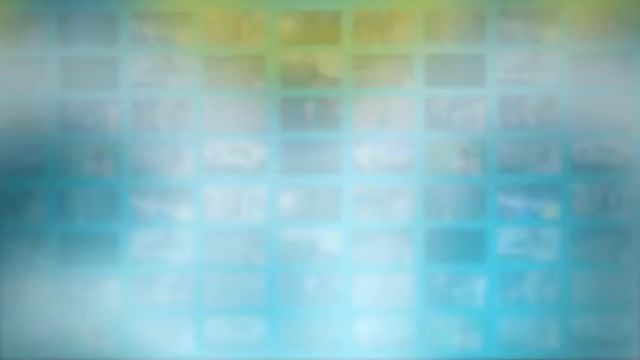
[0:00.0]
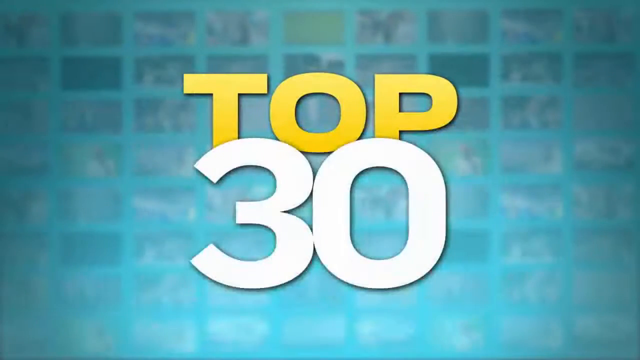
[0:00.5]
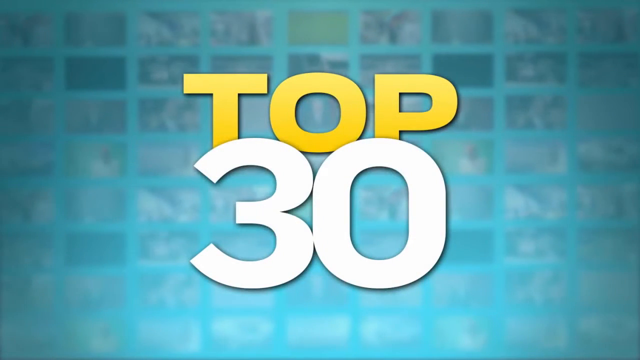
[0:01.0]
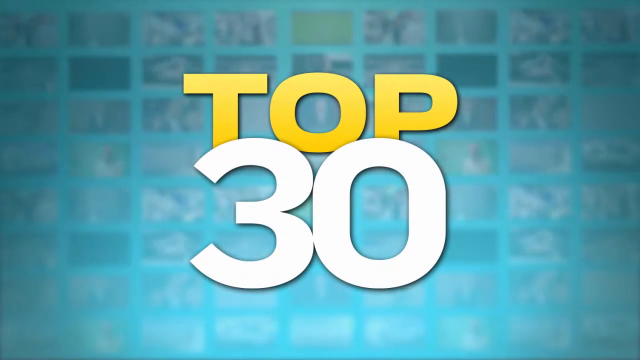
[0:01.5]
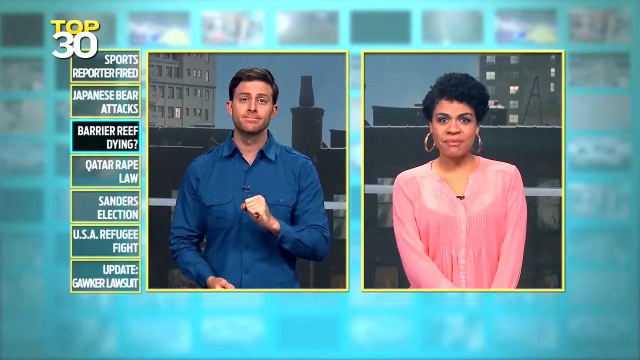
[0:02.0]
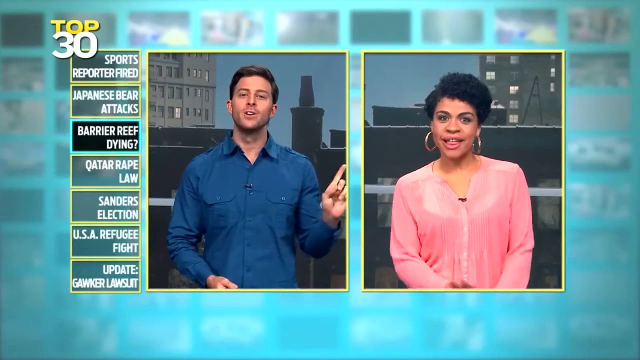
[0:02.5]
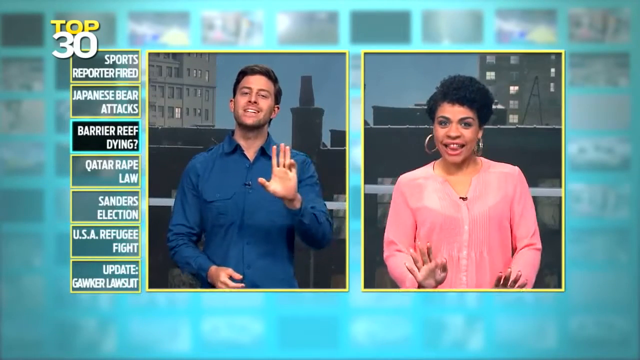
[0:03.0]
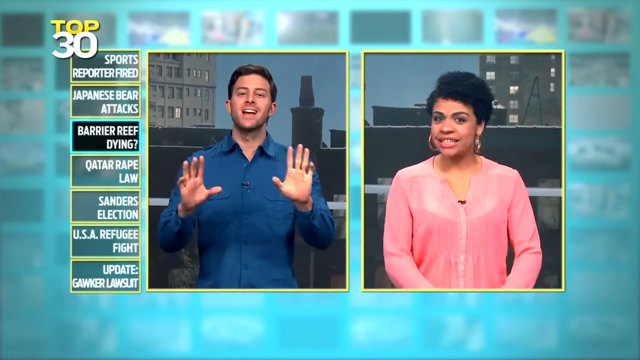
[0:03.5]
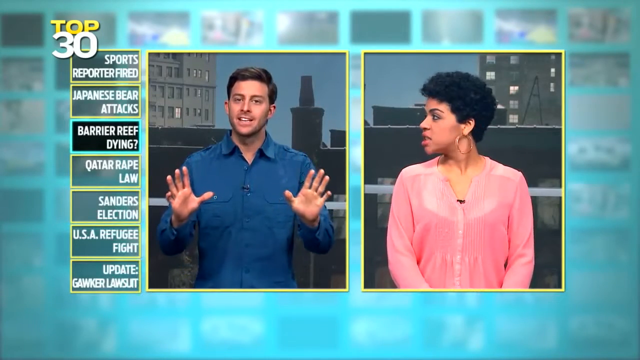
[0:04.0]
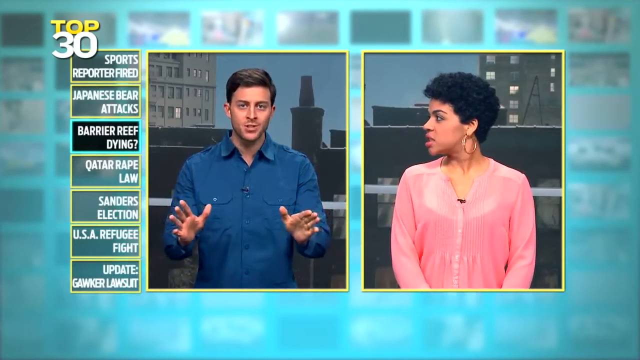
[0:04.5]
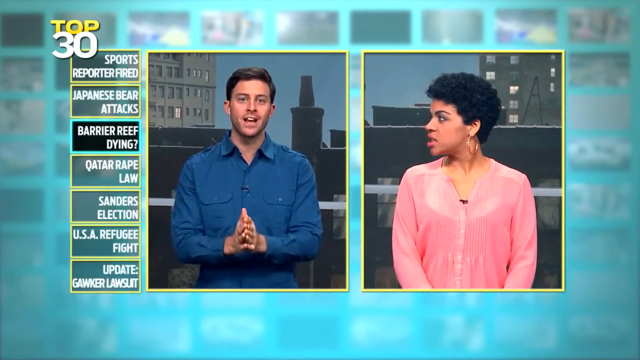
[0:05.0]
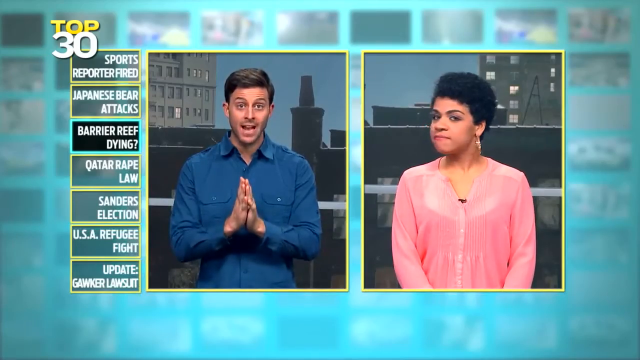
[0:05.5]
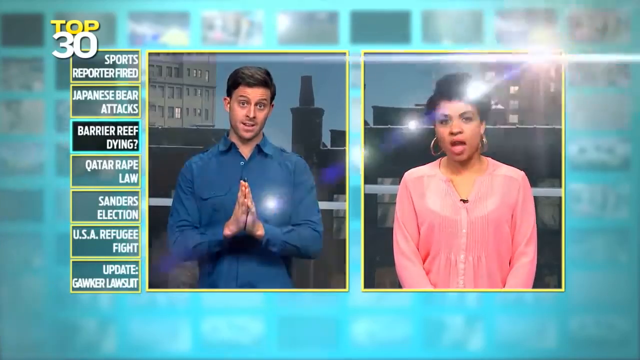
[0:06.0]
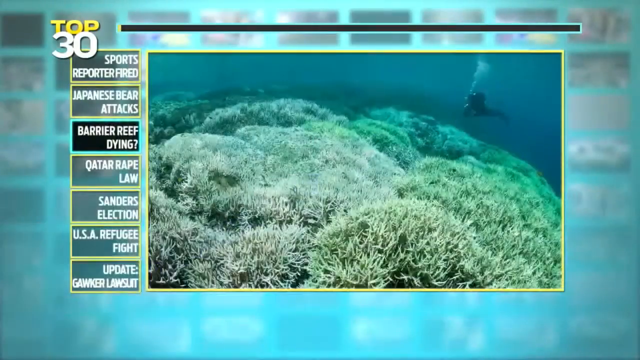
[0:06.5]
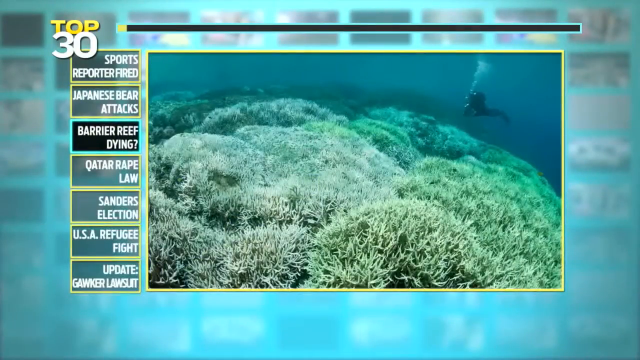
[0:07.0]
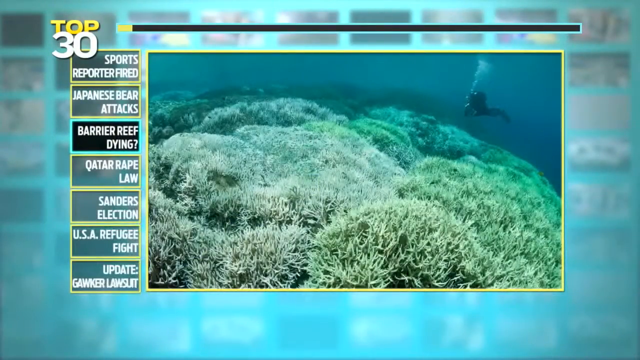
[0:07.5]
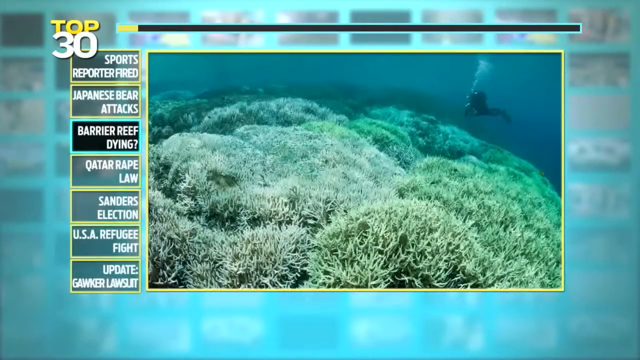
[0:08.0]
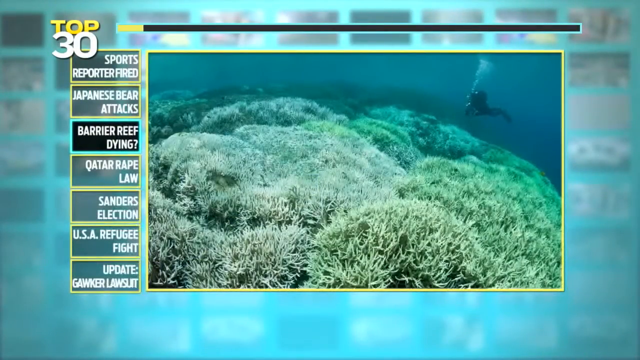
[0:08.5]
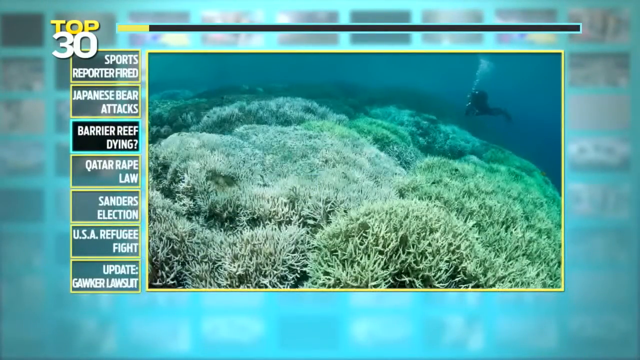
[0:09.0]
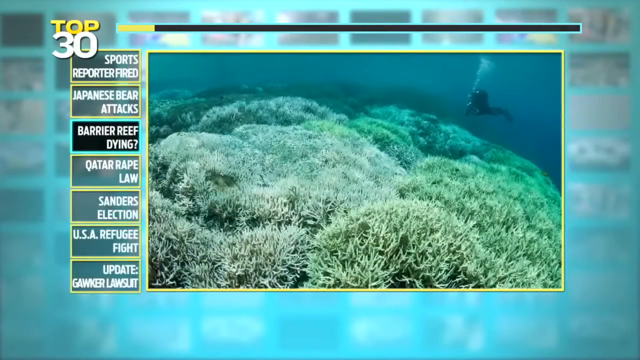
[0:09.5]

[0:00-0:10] Text appears to read "top 30", with "top" in yellow on top and the "30" written bigger underneath, sort of part of the bottom of "top". A bunch of blue borders surround what look like TV-like pictures, and the screen shows some animation. The video then goes into a side-by-side of a man and a woman with something like a yellow border around it. The man has his hand up in a fist and wears a blue shirt; the woman on the right is Black, with large hoop earrings and a pink long-sleeve shirt. In the top left it says "top 30", and under it is a list of seven categories; the current one, "barrier reef dying", is more black while the others are more translucent. The two are speaking and sort of debating, using their hands, and the man sticks his hand out a little. The background looks like the same area for both, with a cityscape. He seems to be to her right, as she turns to the right while he speaks. Then a scuba-diving video shows a man on the right side diving at the barrier reef, with clusters of mounds of reef that look greenish, a little more whitish green in the middle. The diver looks a little blurry because he is far away, the water looks murky, and a bunch of bubbles are stacked up where his mouthpiece is as he breathes out.